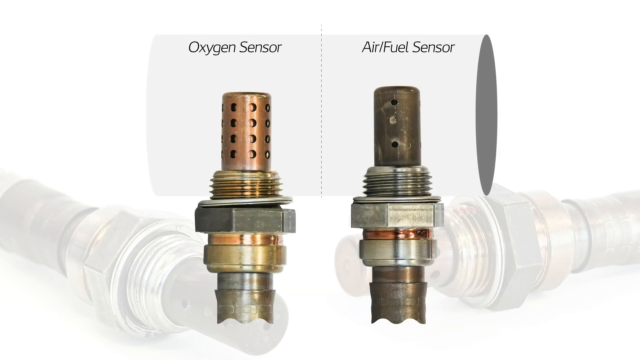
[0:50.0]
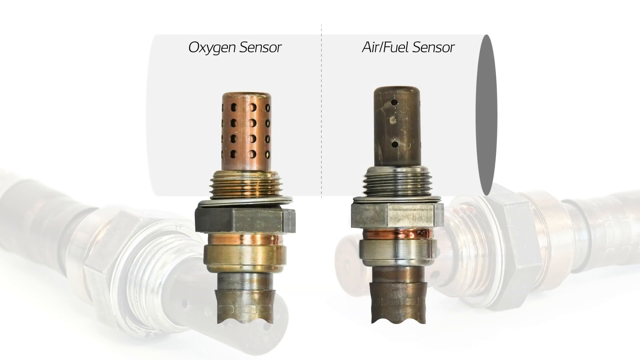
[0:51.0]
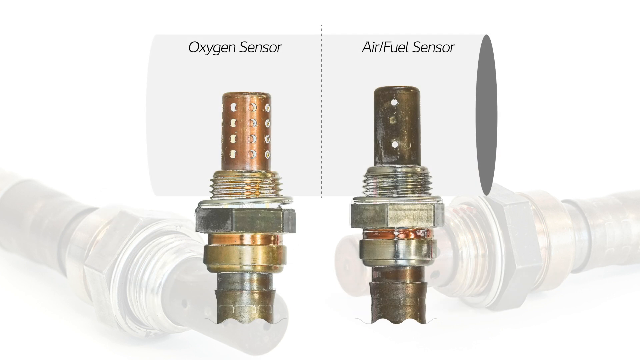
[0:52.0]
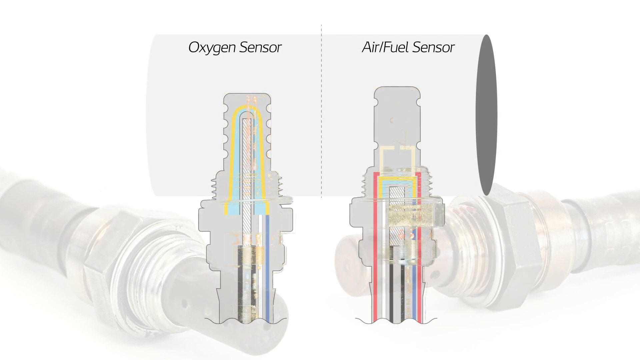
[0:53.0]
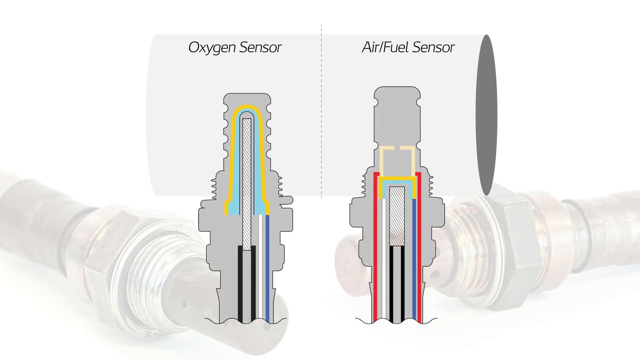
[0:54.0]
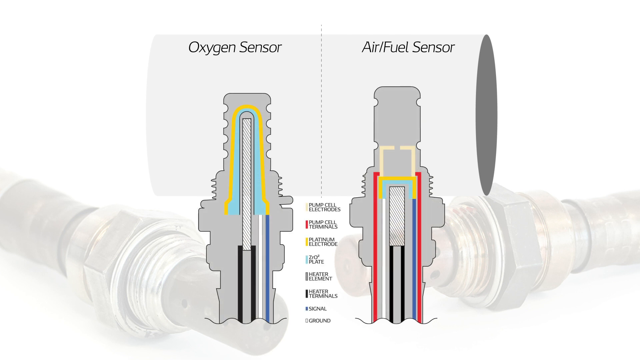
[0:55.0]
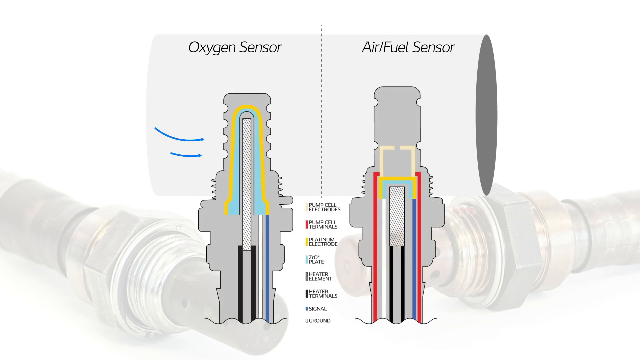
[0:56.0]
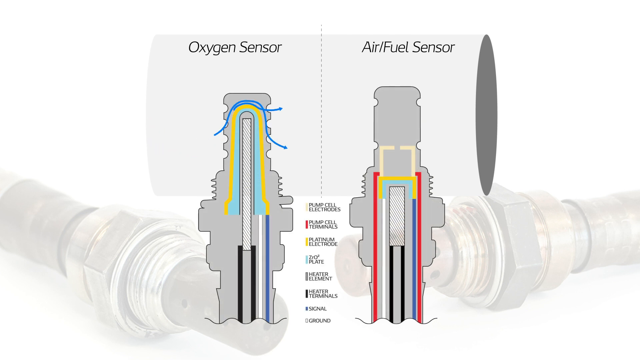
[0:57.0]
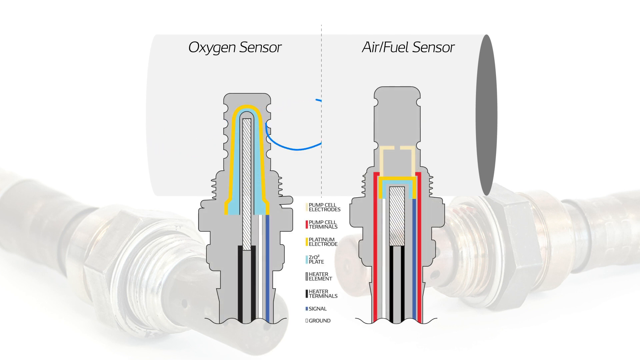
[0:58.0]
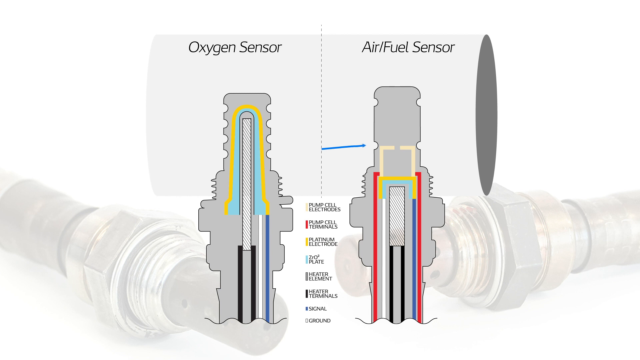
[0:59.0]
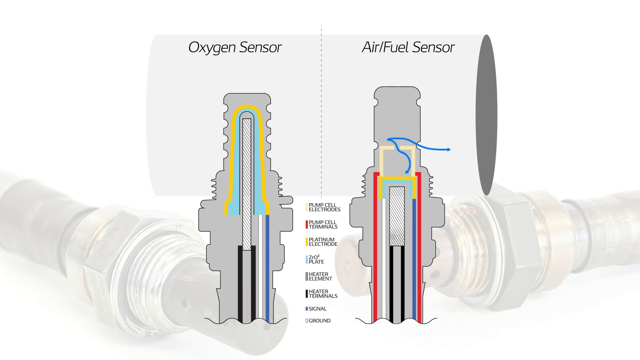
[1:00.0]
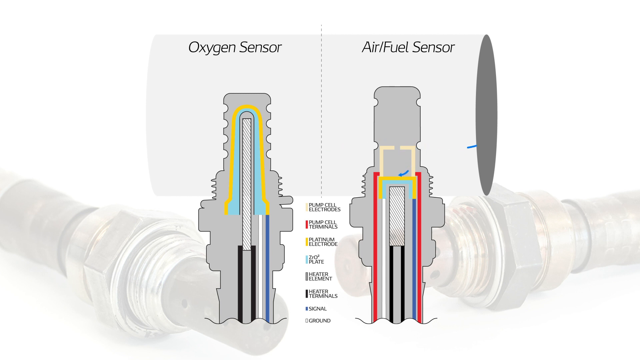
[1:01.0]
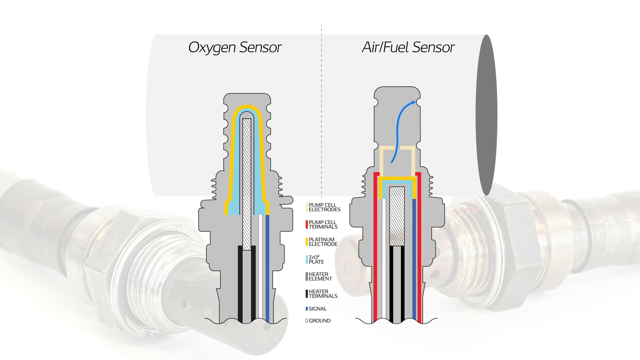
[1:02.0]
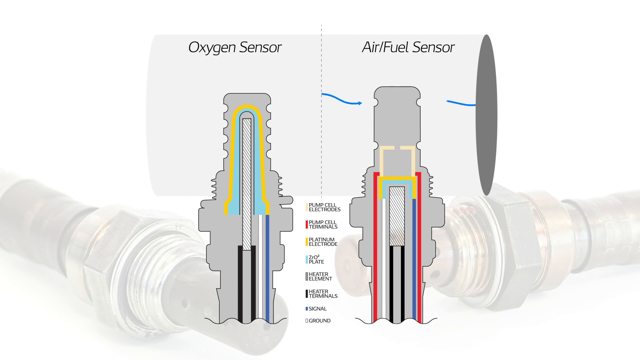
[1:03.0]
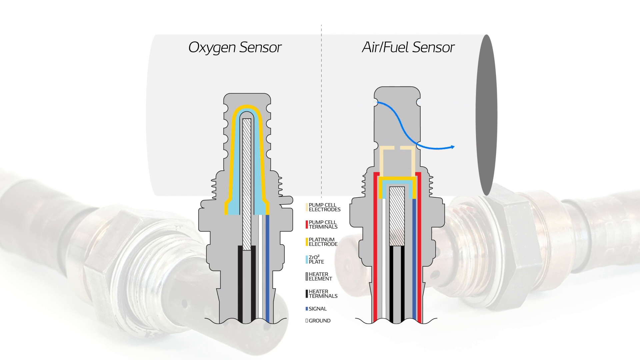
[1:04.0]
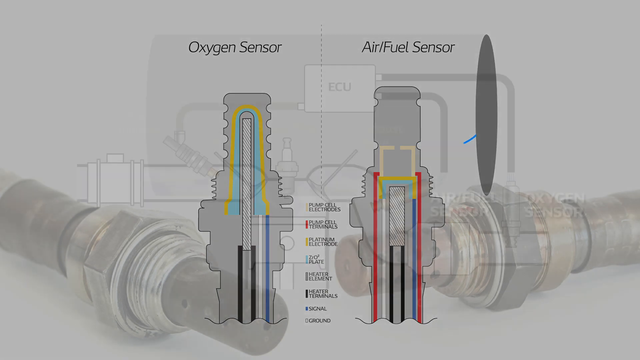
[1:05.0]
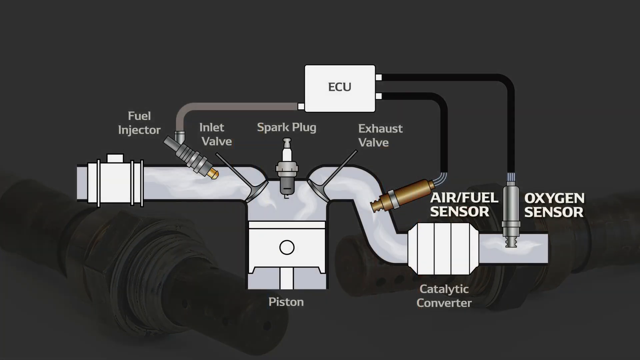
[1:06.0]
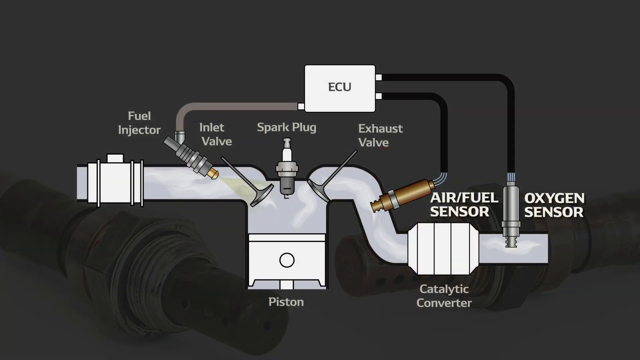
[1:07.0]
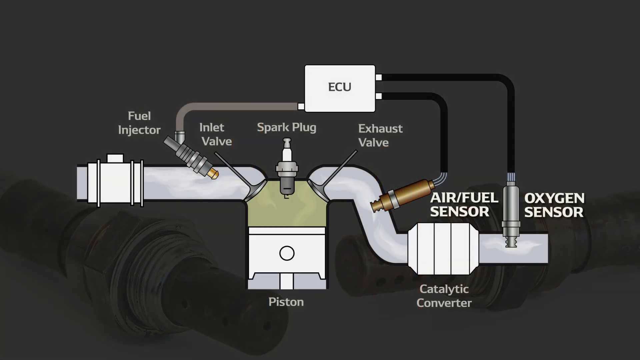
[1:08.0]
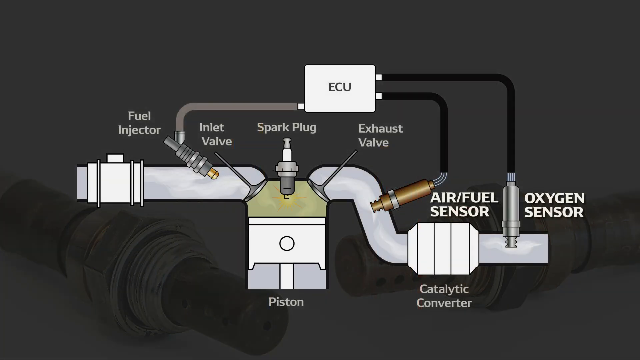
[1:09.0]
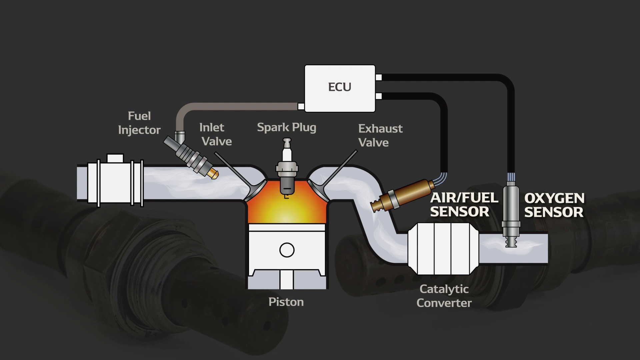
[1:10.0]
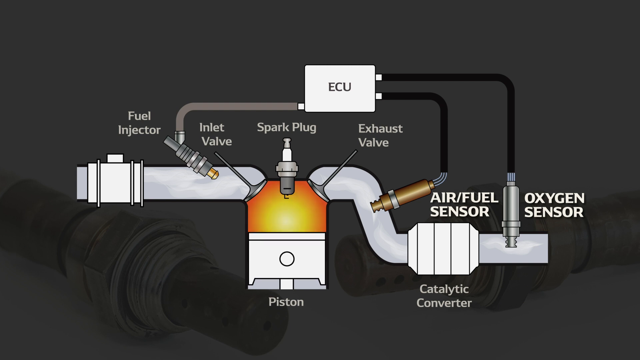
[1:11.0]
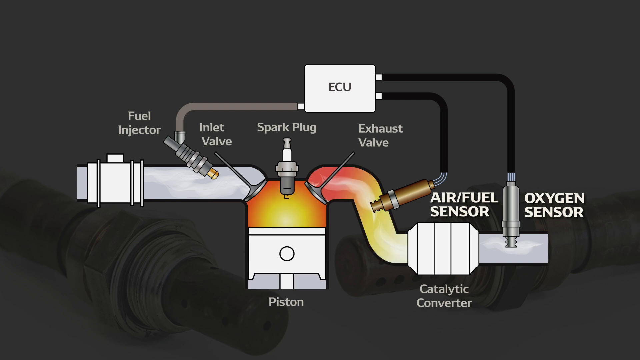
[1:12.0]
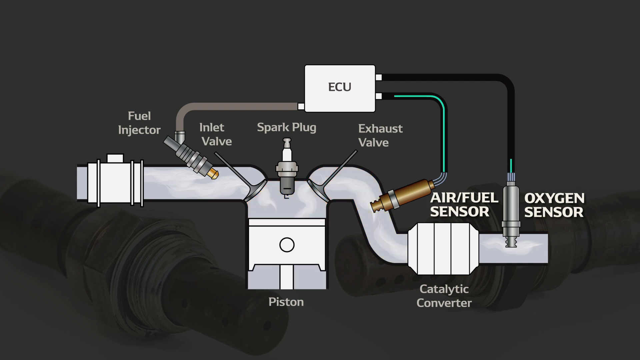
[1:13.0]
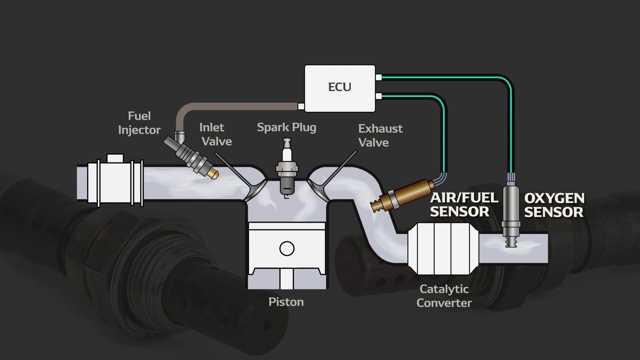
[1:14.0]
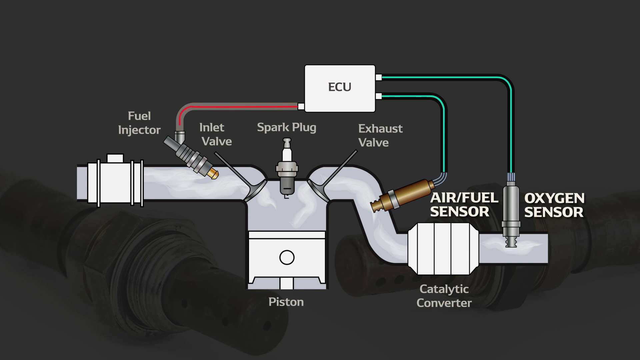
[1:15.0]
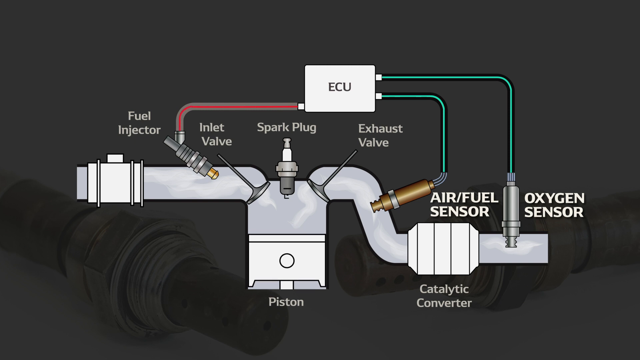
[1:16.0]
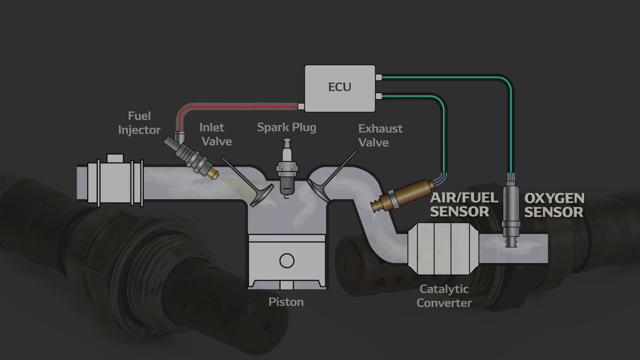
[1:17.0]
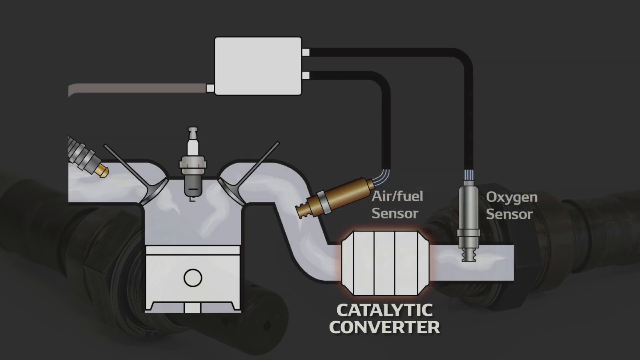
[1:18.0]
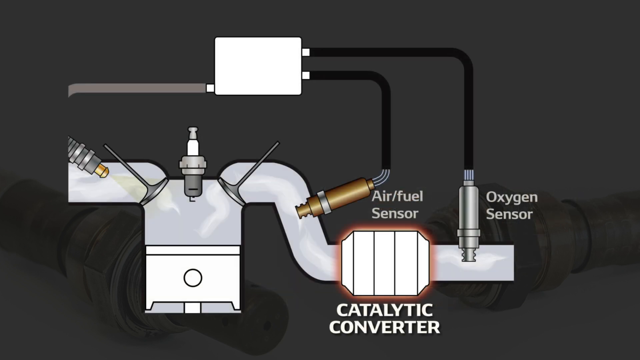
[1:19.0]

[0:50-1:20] A close-up shows the two tools that were in the boxes earlier. The left side is labelled "oxygen sensor," and a grey dotted line runs vertically more than halfway down the screen, though not all the way. The right side is labelled "air/fuel sensor." The insides of both are shown animated, with words coming in that are not readable, apparently labels of parts inside each one. What looks like an air current goes through both of them. Labels then appear for the fuel injector, inlet valve, spark plug, exhaust valve, a fuel sensor, oxygen sensor and catalytic converter.